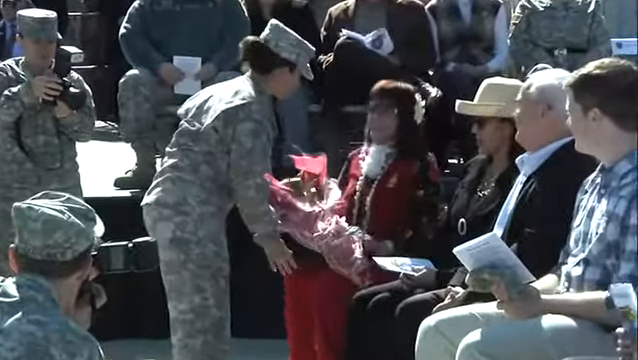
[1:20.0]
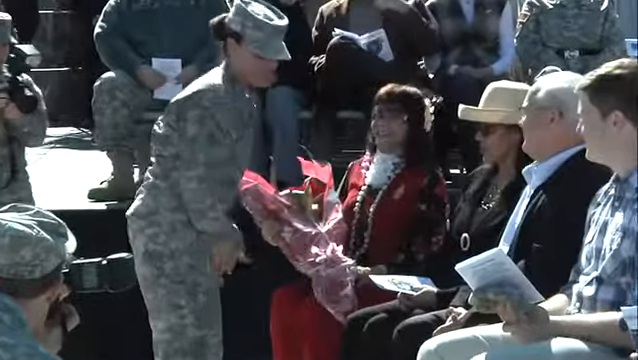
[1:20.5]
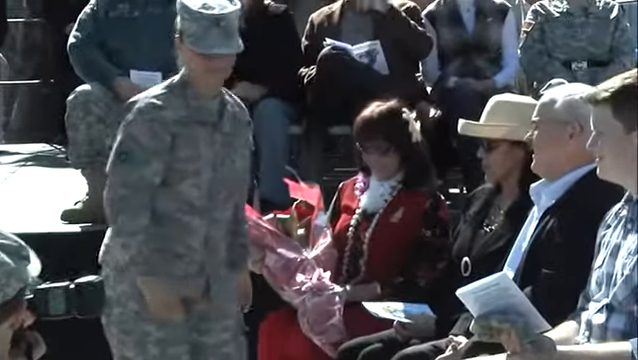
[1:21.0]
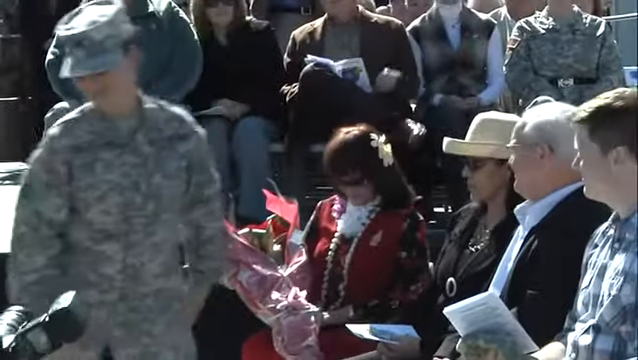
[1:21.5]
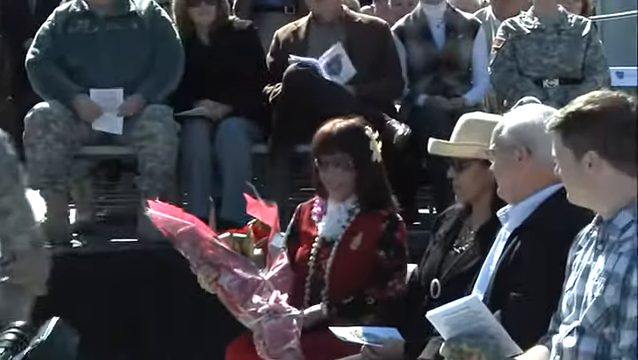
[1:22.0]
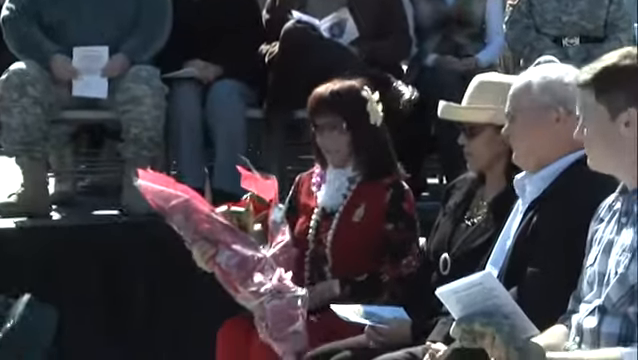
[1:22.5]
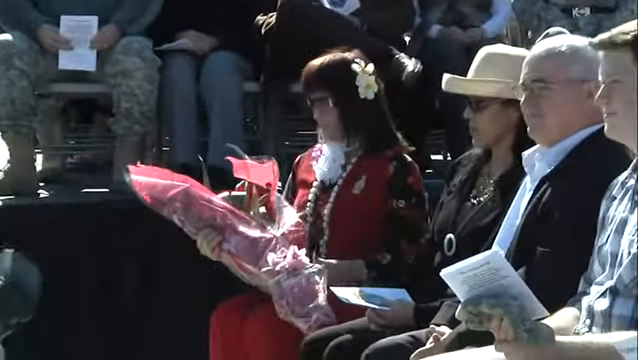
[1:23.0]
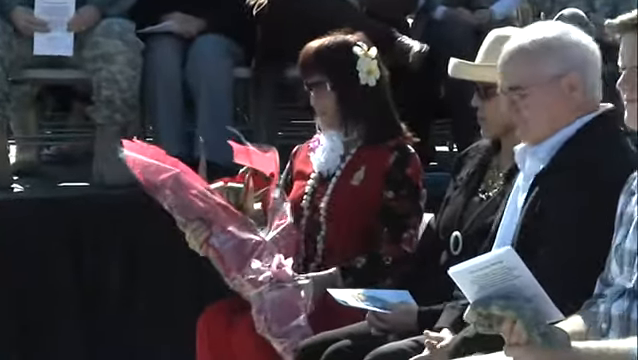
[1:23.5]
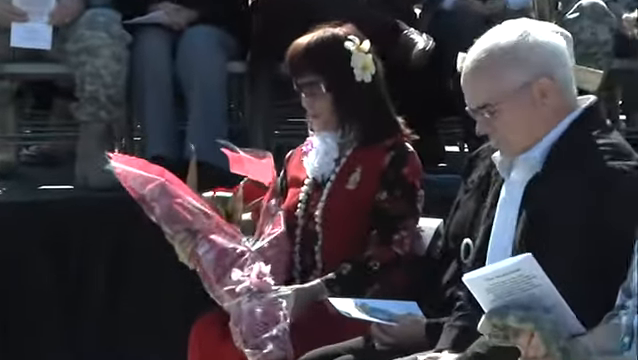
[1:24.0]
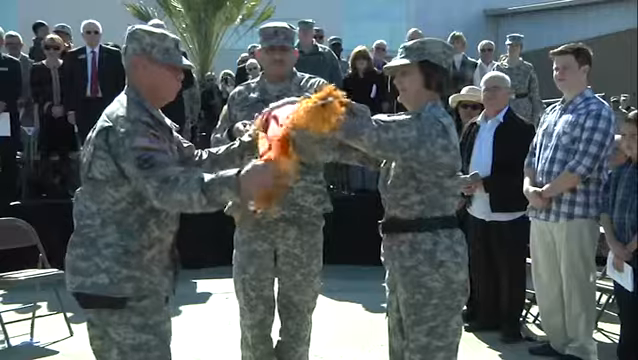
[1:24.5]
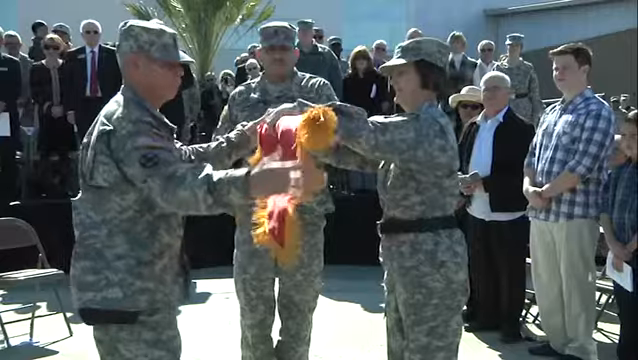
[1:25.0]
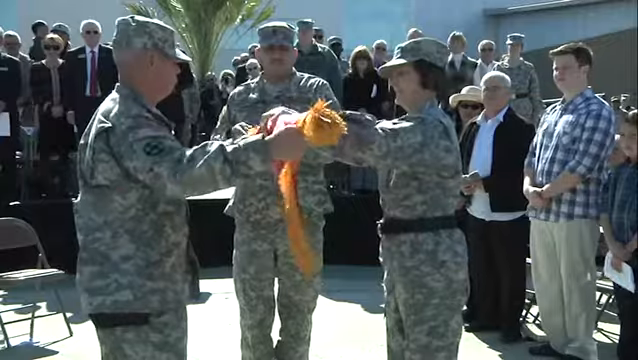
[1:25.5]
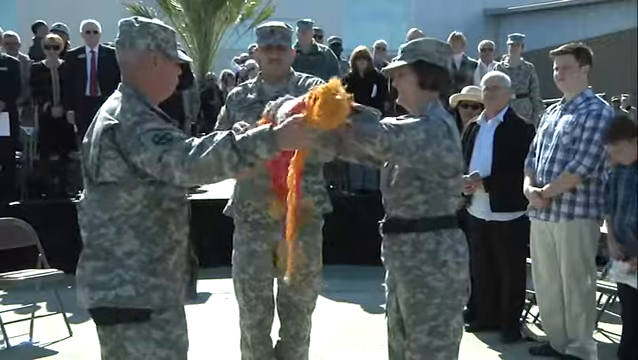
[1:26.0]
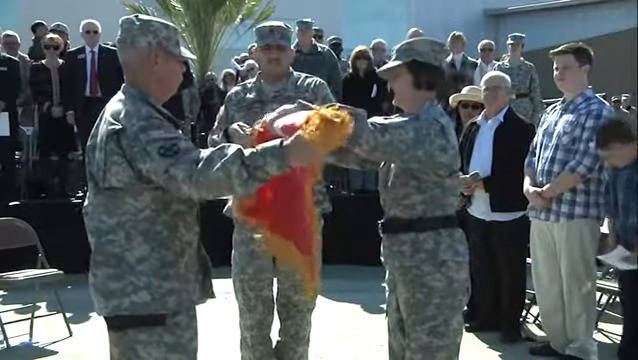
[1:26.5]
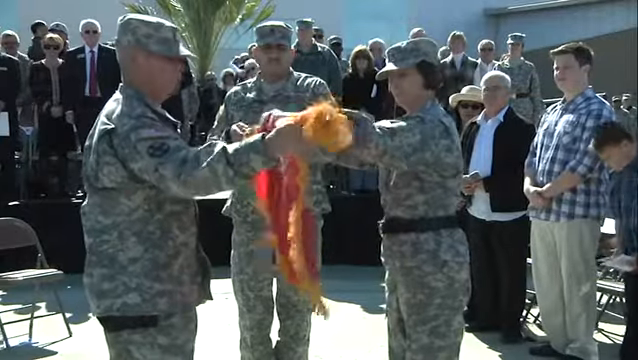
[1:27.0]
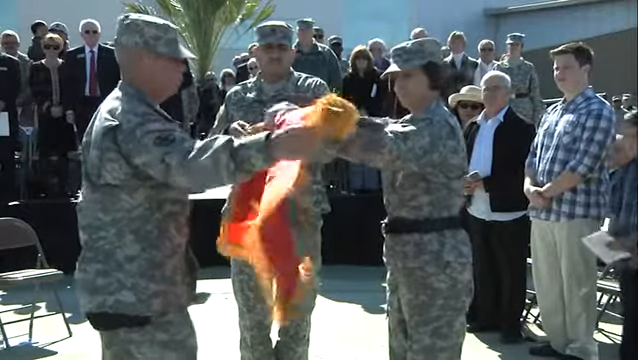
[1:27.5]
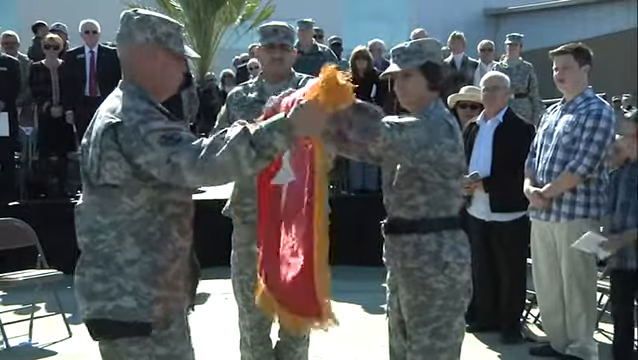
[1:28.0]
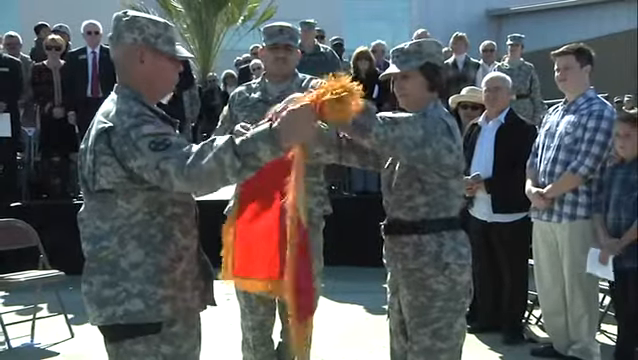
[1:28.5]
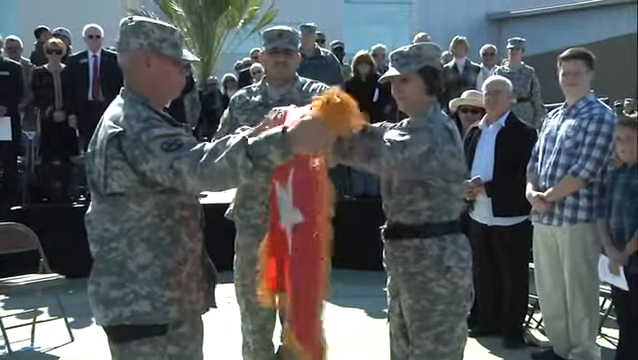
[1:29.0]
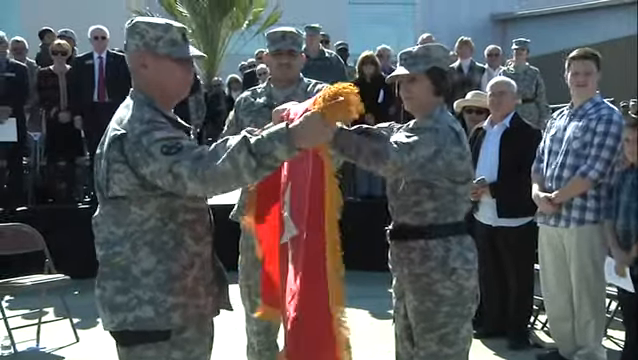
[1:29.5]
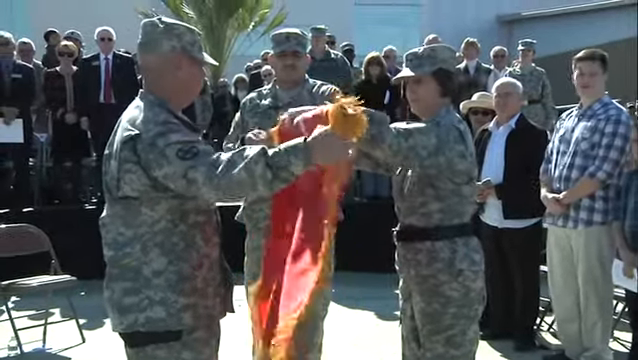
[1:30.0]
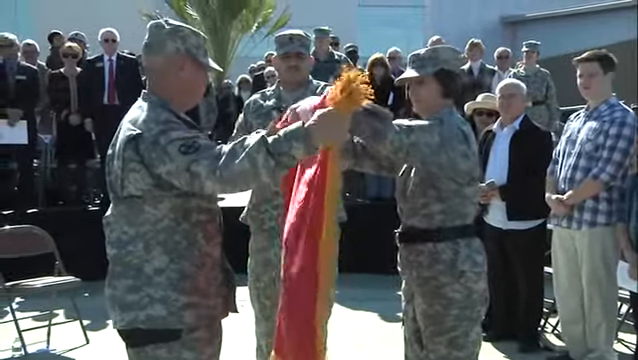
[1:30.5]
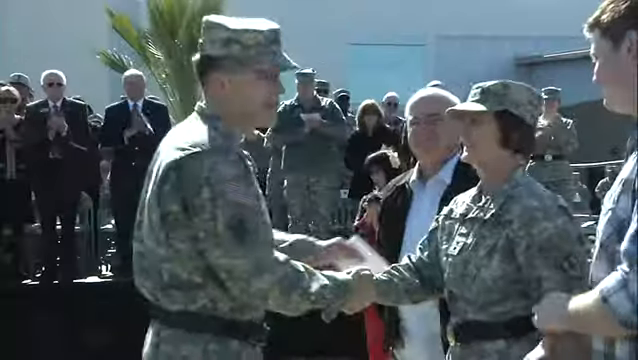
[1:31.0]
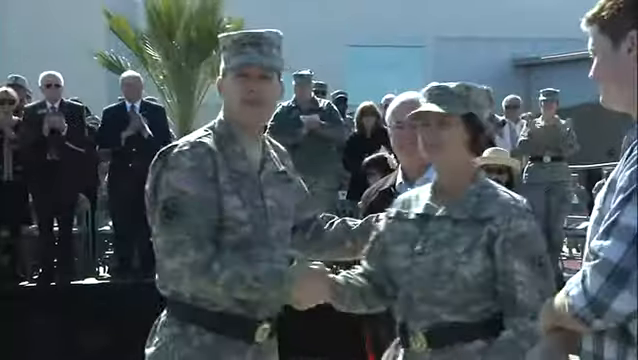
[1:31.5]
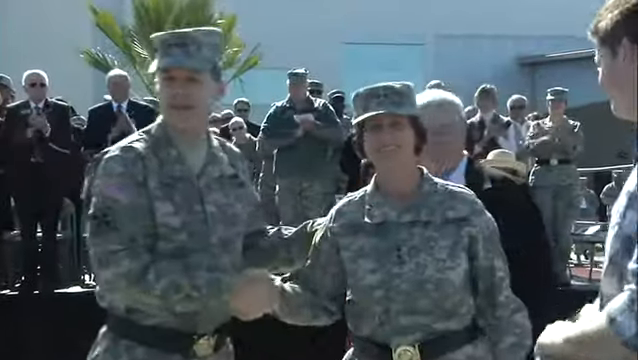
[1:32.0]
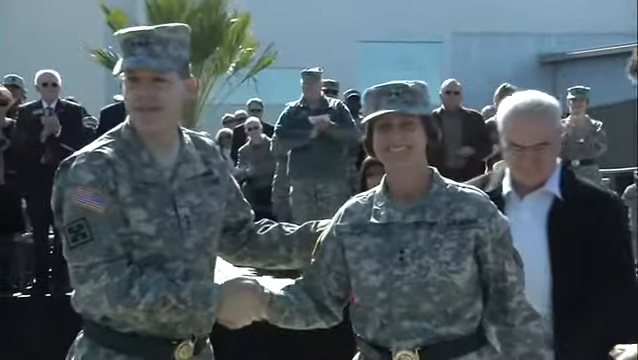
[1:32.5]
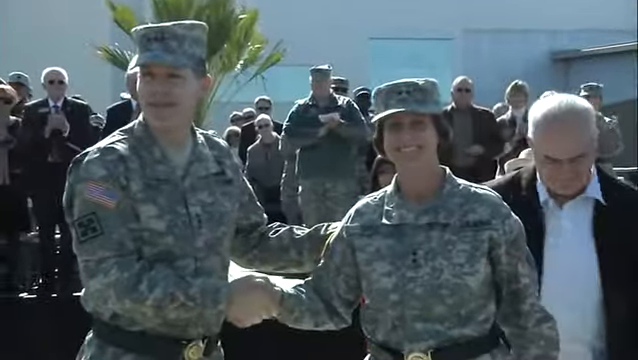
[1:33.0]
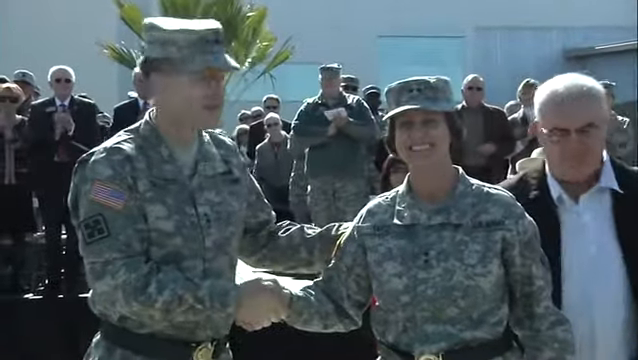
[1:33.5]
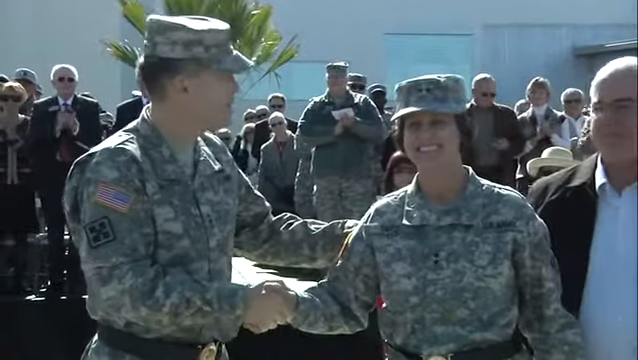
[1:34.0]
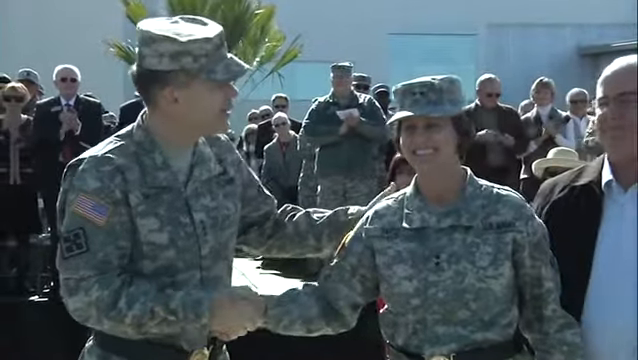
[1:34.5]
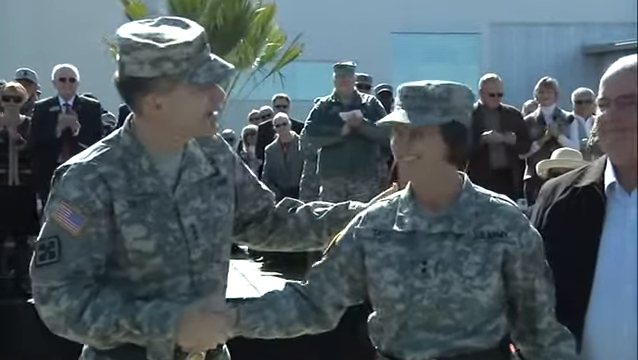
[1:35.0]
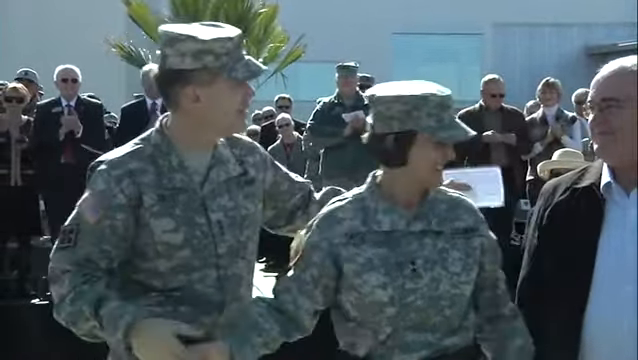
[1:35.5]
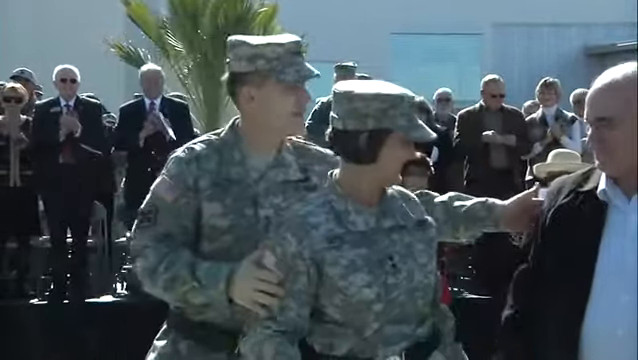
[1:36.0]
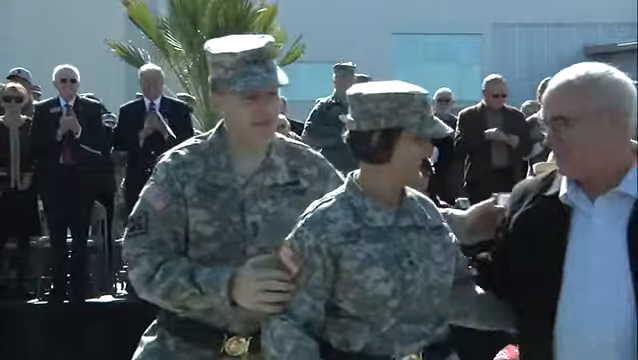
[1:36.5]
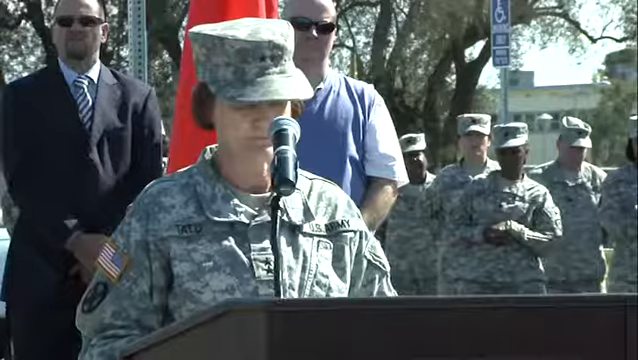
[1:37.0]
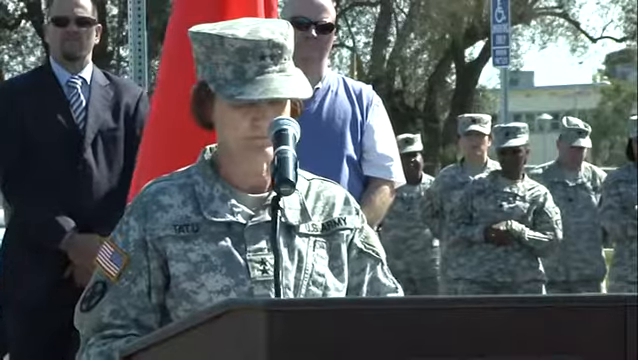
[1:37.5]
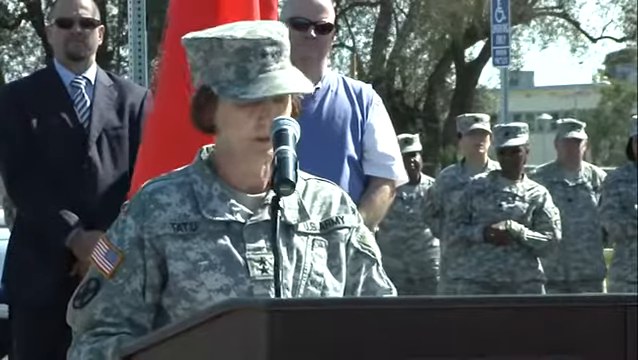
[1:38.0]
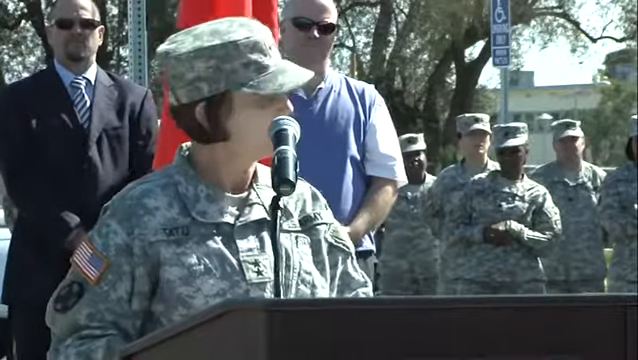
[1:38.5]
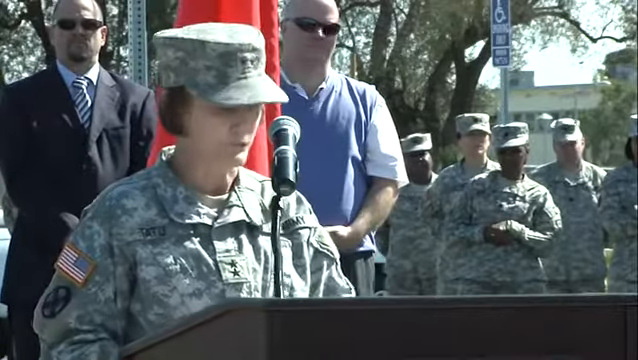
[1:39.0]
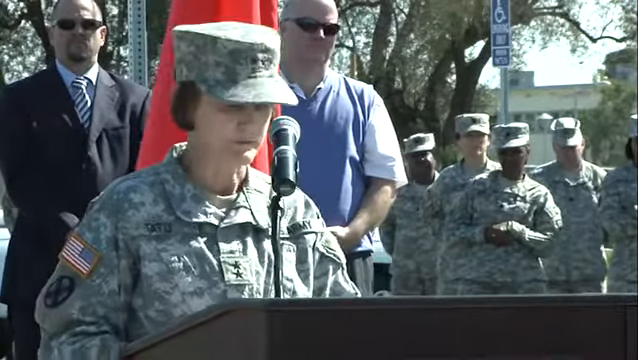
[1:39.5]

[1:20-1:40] A line of people sit in chairs with a small stage behind them. A woman in a military uniform of camouflage pants, shirt and hat carries over a bouquet of flowers wrapped in pink paper and hands it to a woman sitting in one of the chairs, who has long brown hair and a red sweater. The video cuts to three people in military uniforms unraveling a flag that is red with a white star in the middle and orange fringy material along its outskirts. It then cuts to a man standing on the left of the screen in a camouflage military uniform and a hat with three stars on the front; standing in front of him is a woman in a camouflage military uniform, and they shake hands. Then she speaks into a microphone.